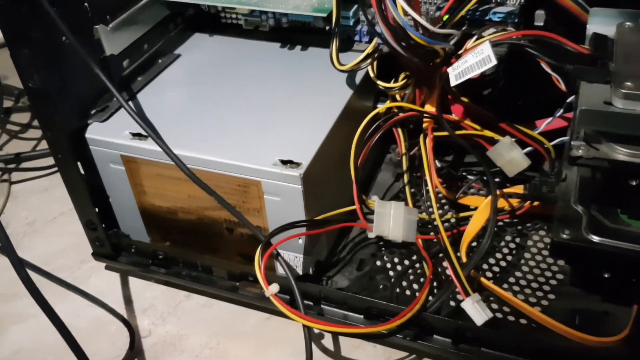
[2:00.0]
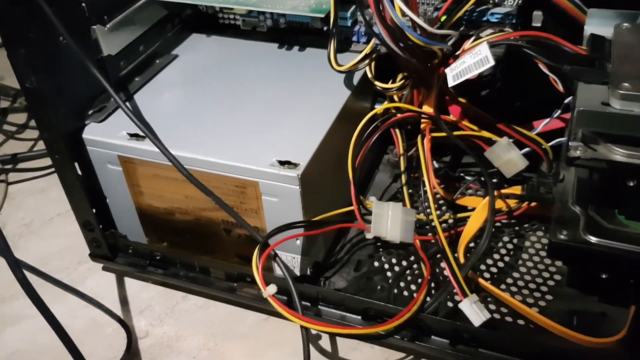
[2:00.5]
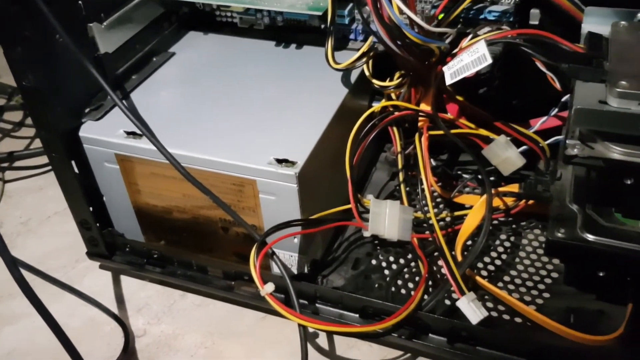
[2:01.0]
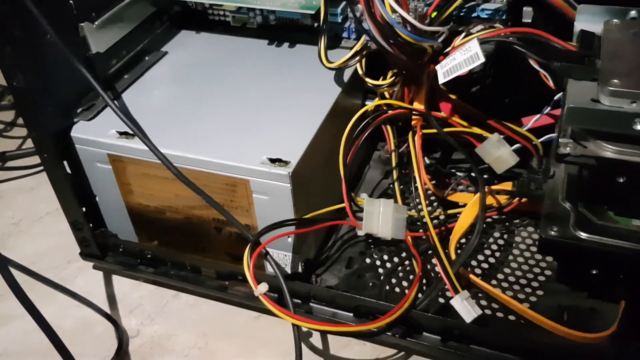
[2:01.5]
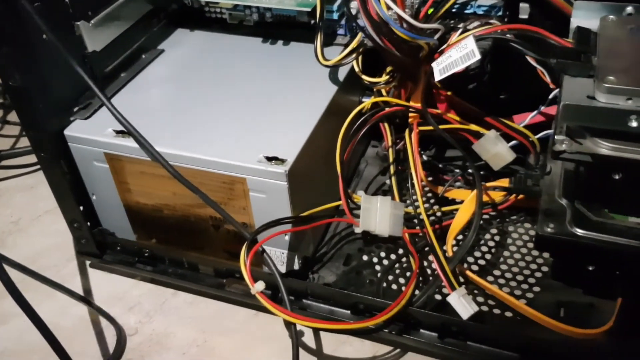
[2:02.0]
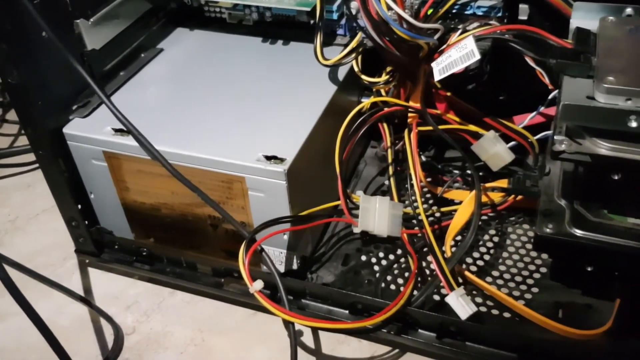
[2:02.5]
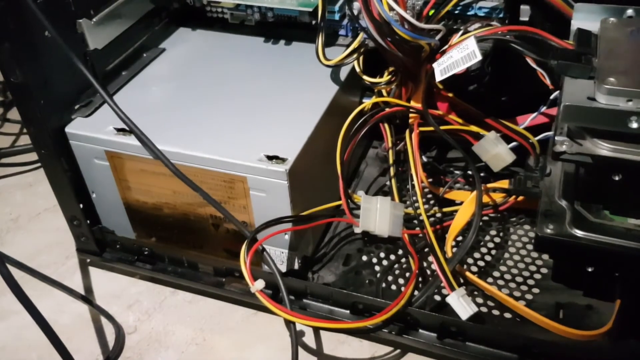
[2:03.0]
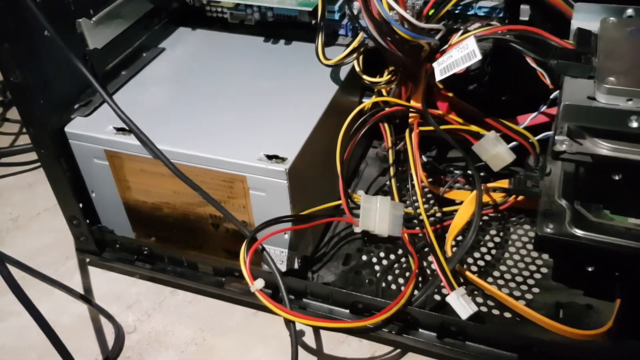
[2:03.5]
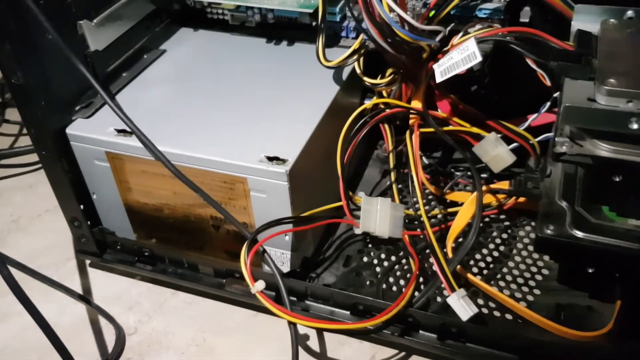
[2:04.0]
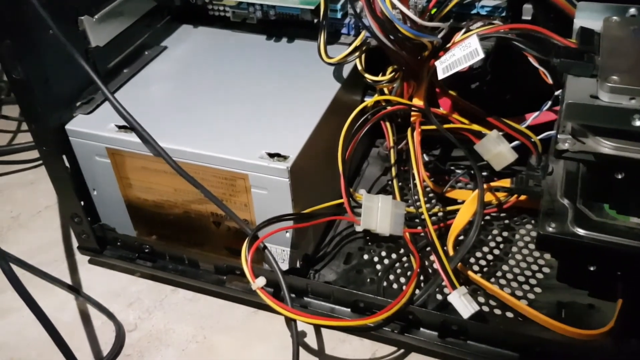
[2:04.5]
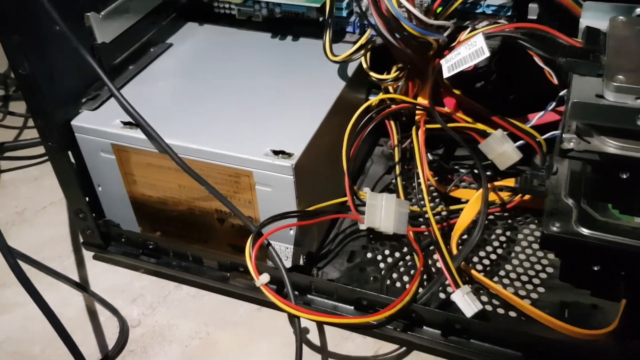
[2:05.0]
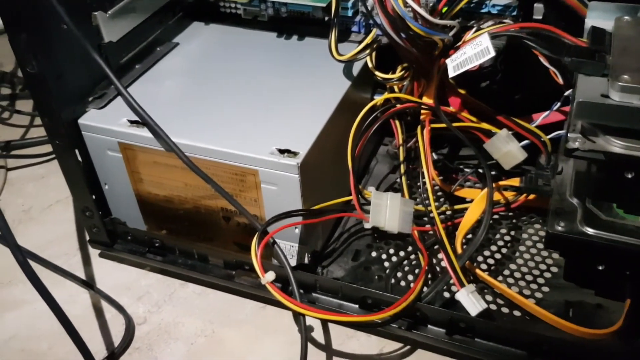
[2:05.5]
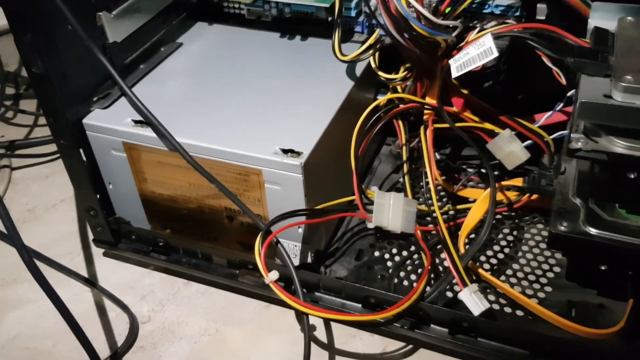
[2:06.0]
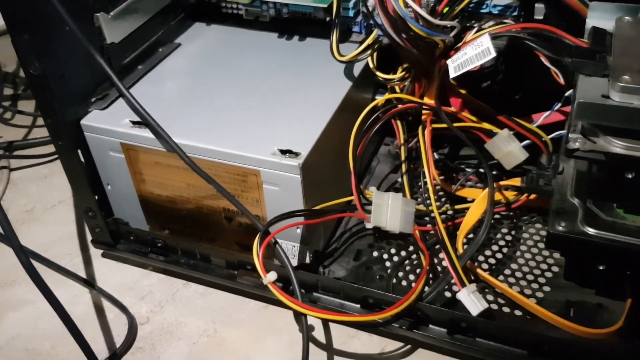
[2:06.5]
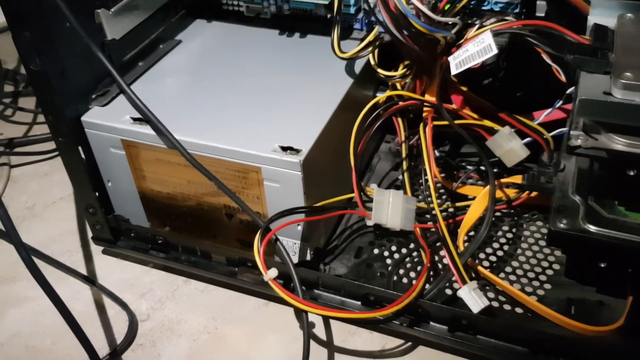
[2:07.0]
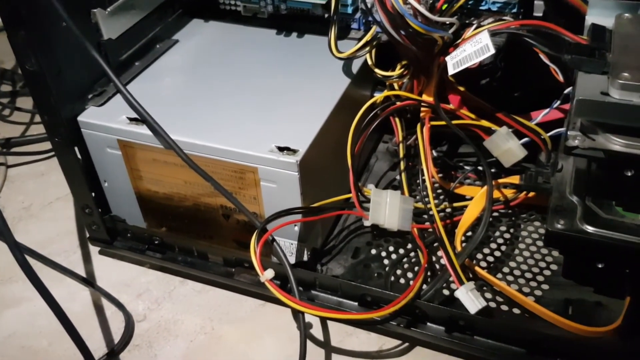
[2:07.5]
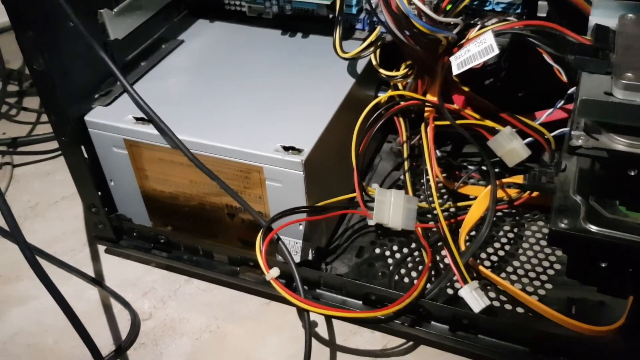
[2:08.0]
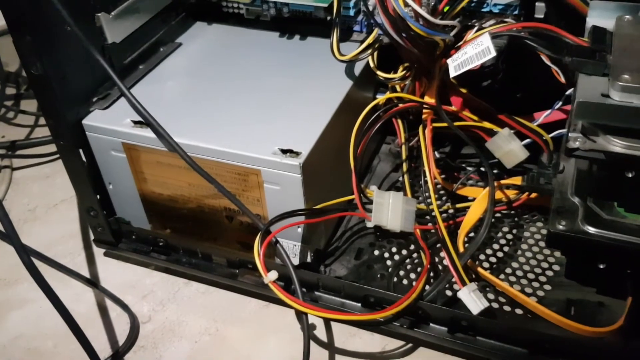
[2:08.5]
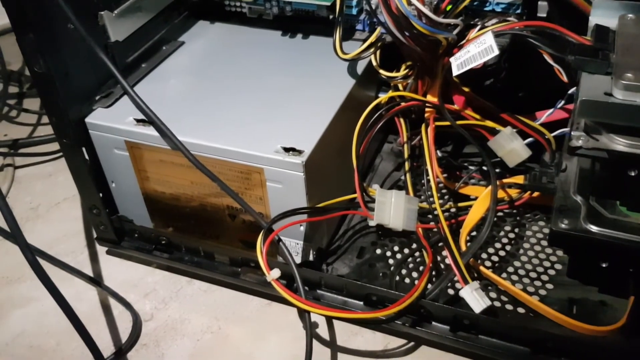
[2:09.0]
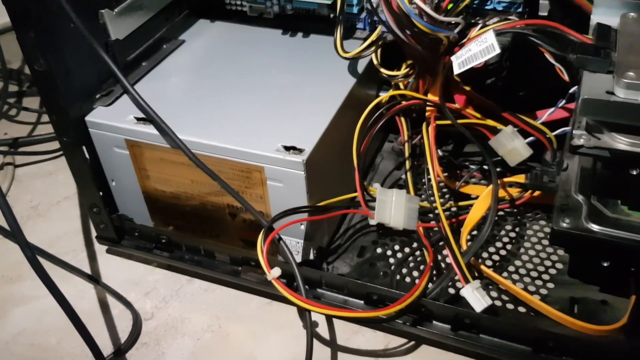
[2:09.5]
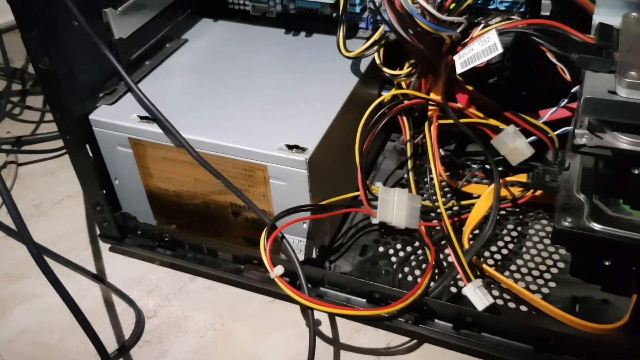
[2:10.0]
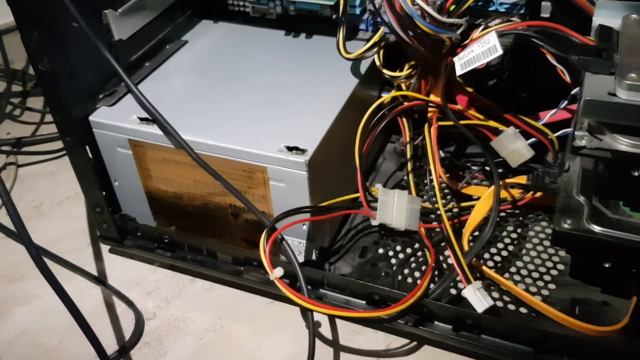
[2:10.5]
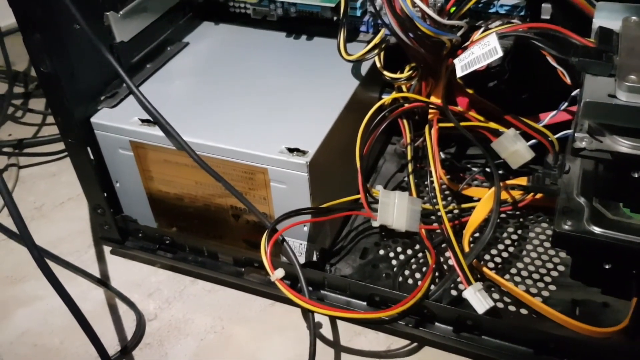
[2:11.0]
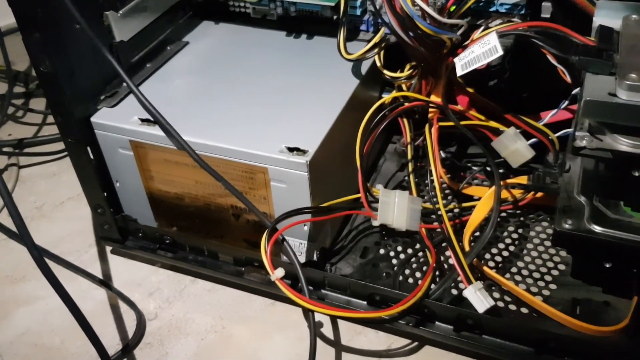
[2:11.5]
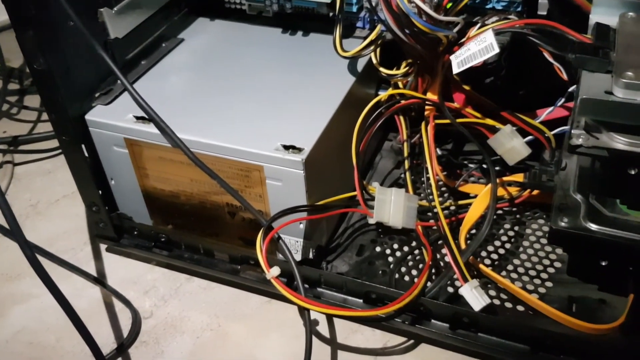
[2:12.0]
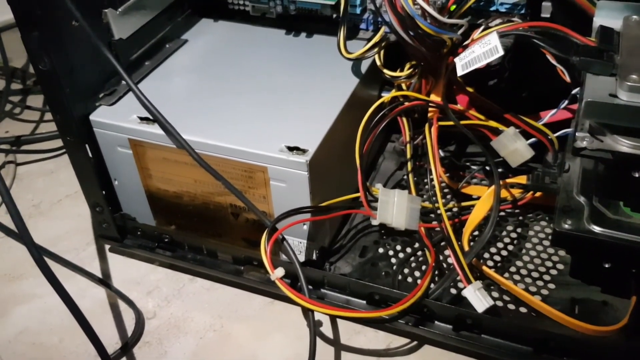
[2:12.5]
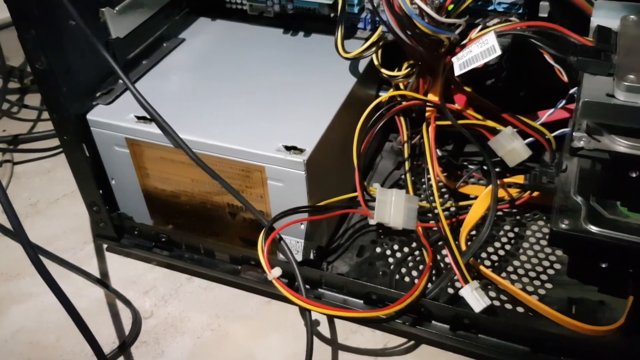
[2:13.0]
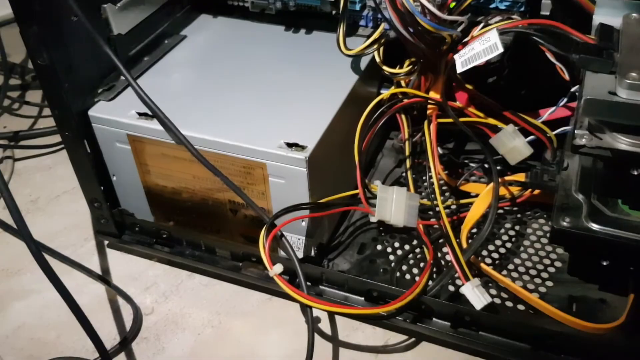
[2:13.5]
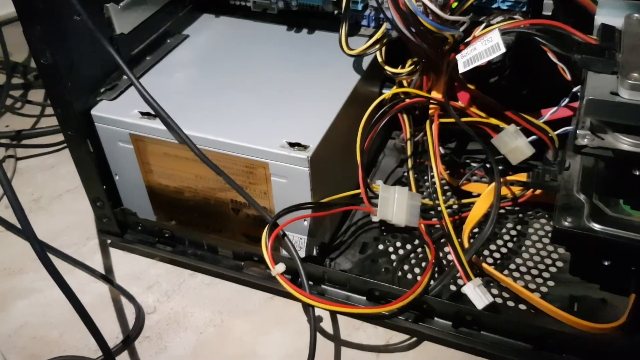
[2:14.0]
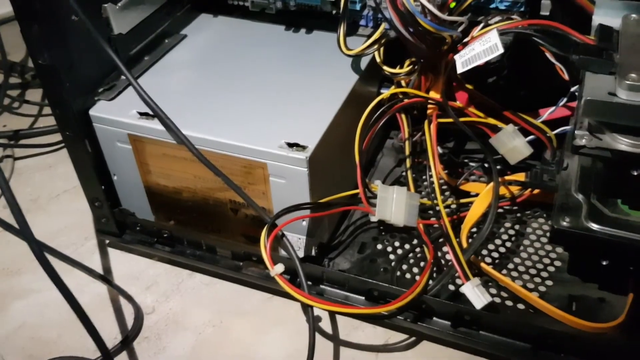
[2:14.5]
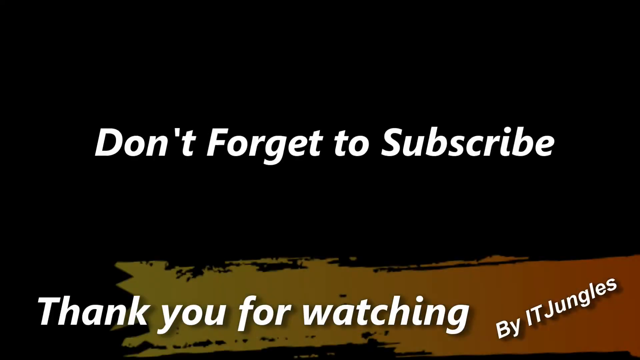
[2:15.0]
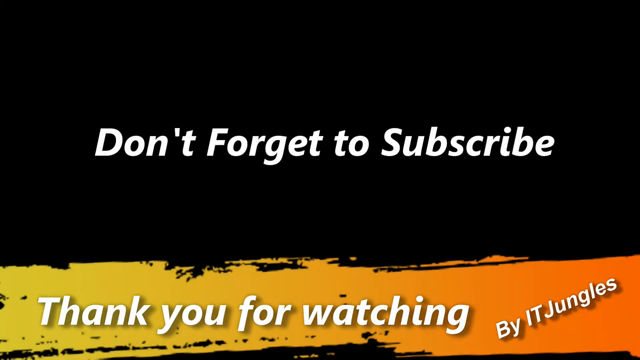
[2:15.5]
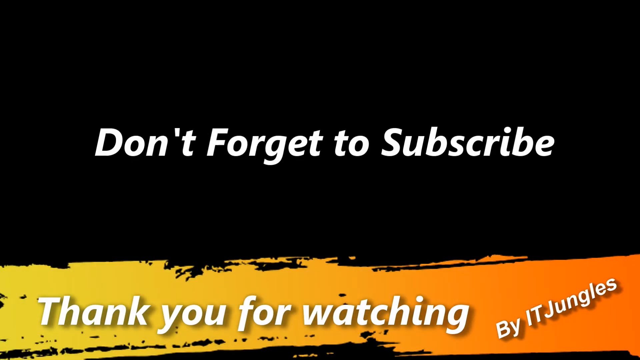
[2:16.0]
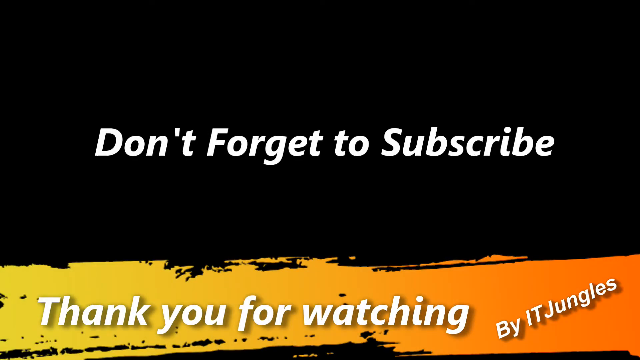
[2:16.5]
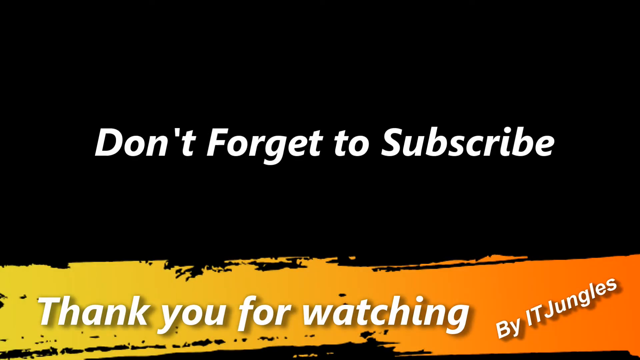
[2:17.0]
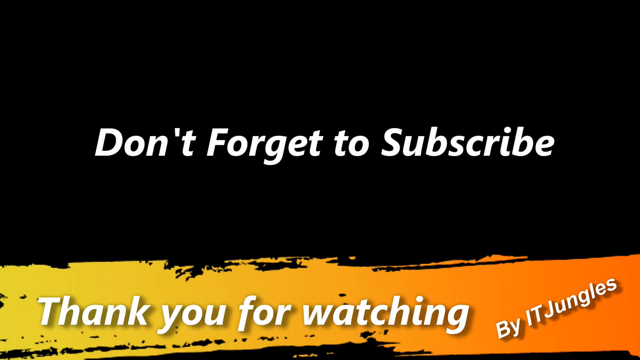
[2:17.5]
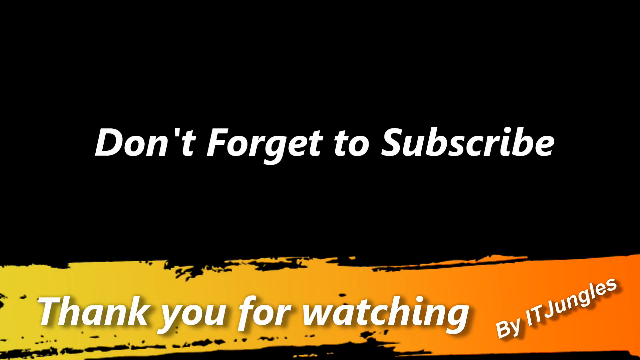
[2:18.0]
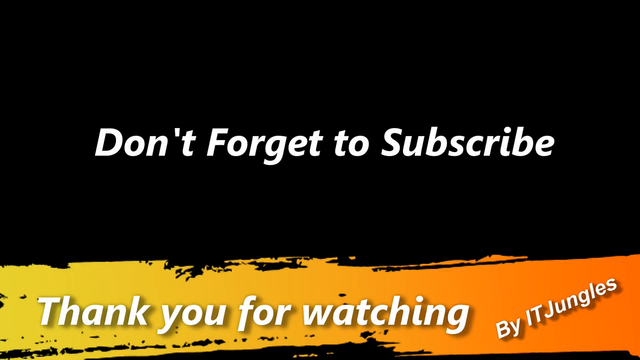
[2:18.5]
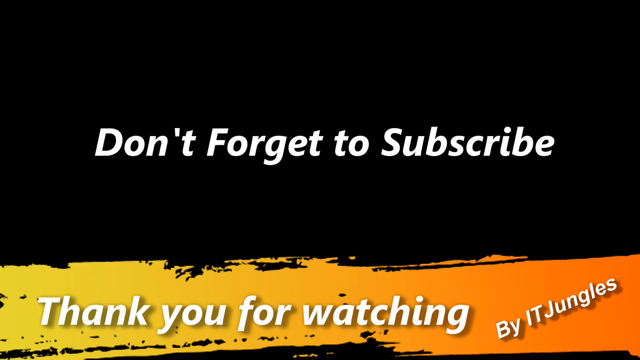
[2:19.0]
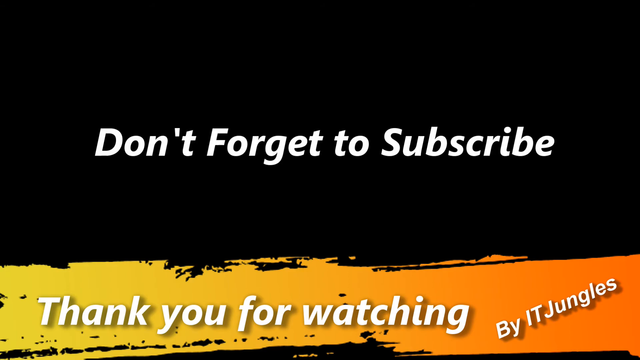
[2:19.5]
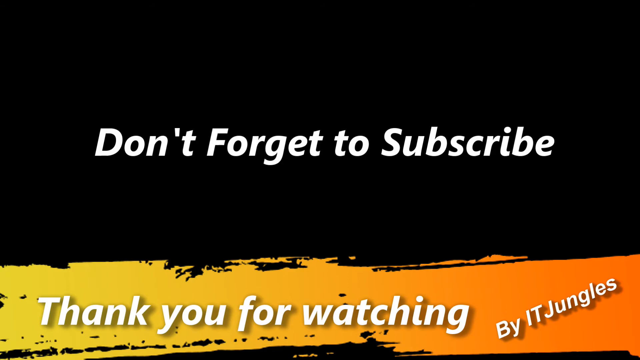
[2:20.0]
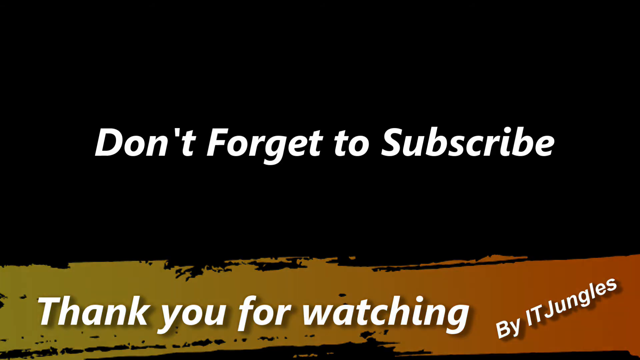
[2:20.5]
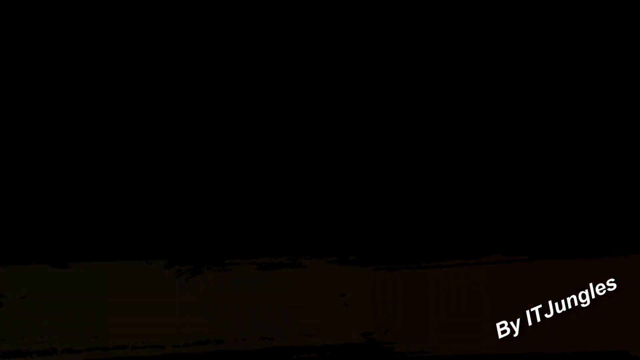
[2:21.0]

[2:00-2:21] The scene is more well-lit. The front of the old computer hardware, where apparently warning information was visible, is covered with something brown. The same bundle of cords is on the right-hand side; nothing has been fixed or changed and everything looks the same. The white piece of paper that had been on the right-hand side, apparently reading "5C", is now gone. The final screen is mainly a black backdrop, with the bottom quarter yellow on the left and orange on the right. White text reads "don't forget to subscribe", white text at the bottom reads "thank you for watching", and "by IT jungles" appears on the right-hand side.